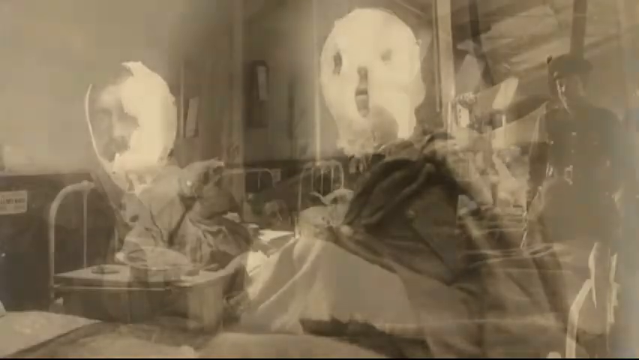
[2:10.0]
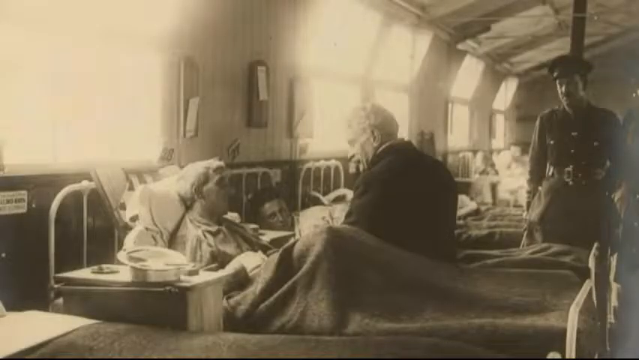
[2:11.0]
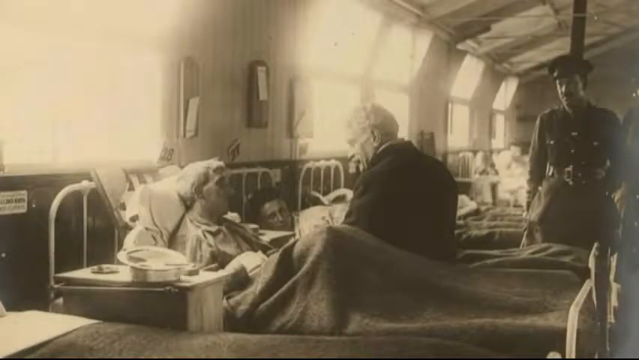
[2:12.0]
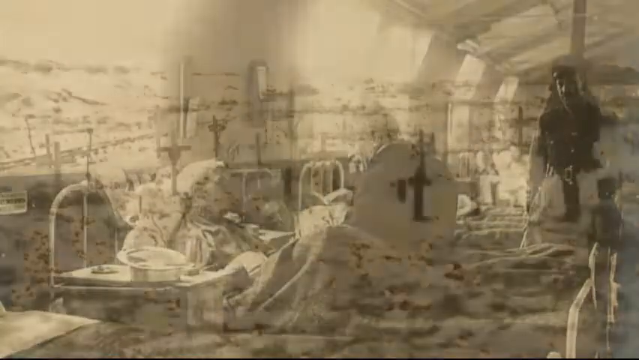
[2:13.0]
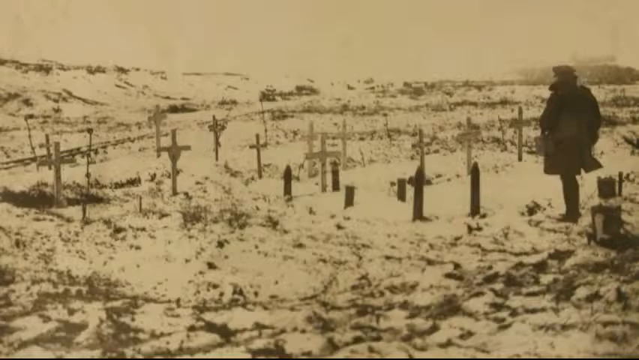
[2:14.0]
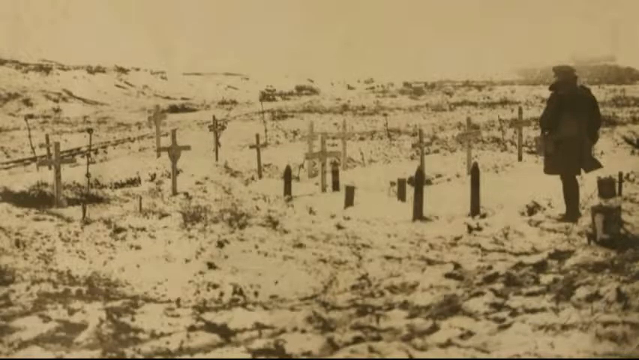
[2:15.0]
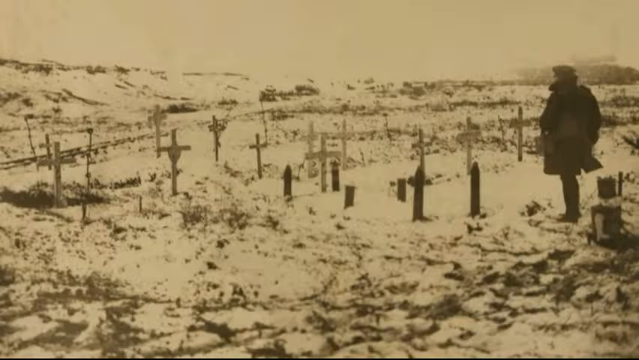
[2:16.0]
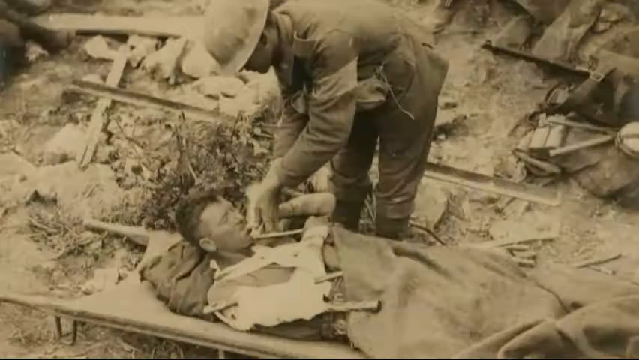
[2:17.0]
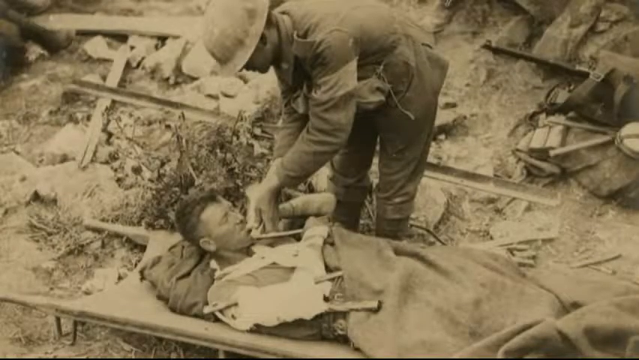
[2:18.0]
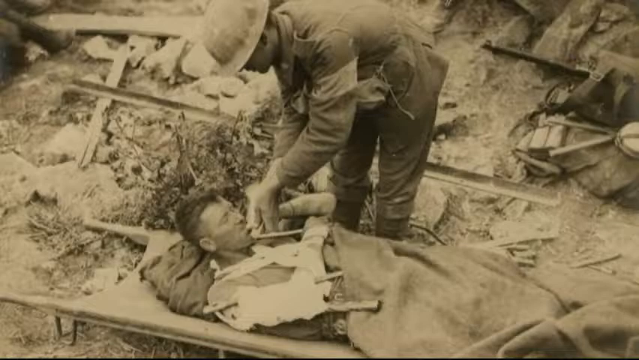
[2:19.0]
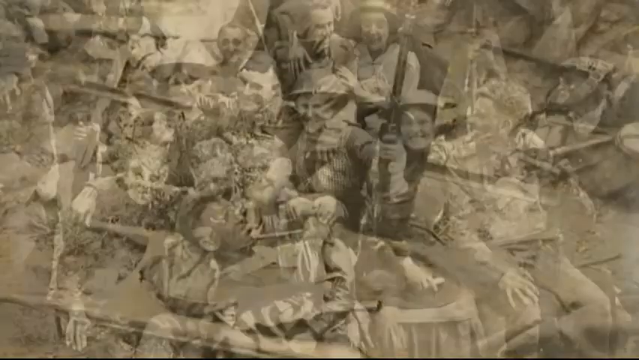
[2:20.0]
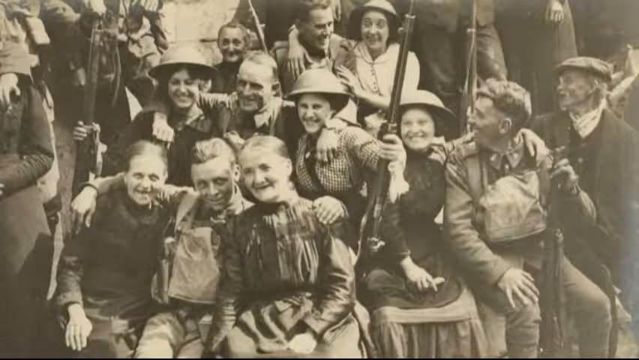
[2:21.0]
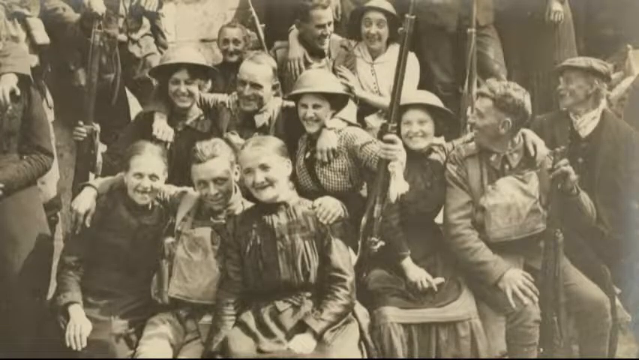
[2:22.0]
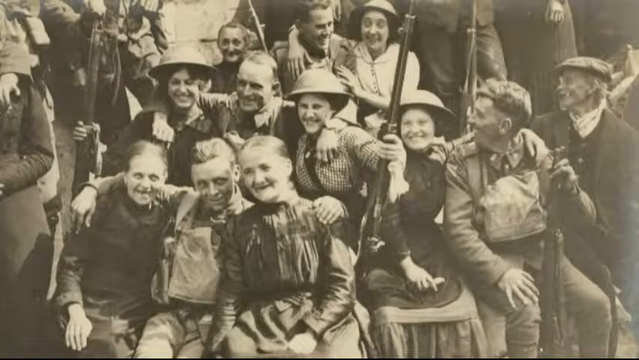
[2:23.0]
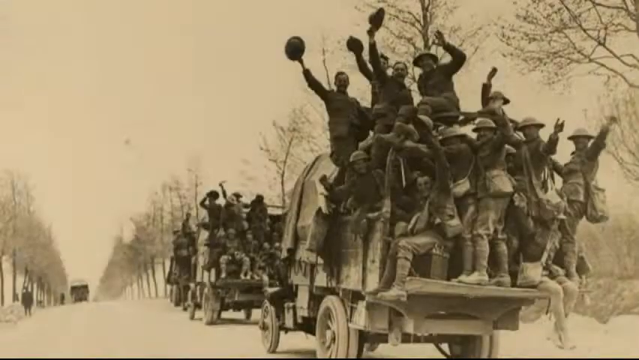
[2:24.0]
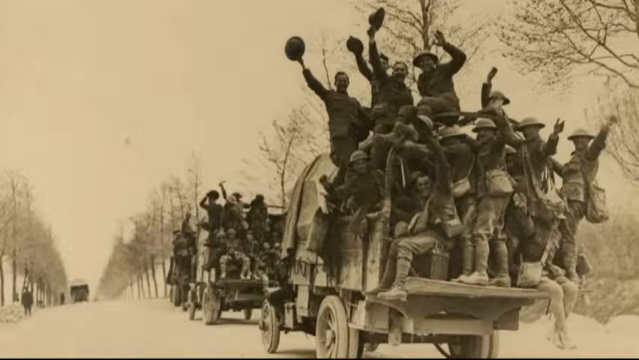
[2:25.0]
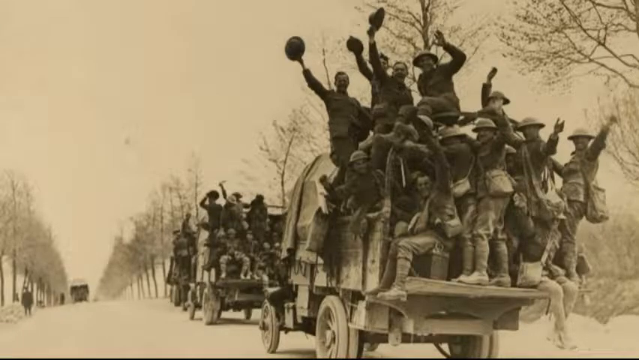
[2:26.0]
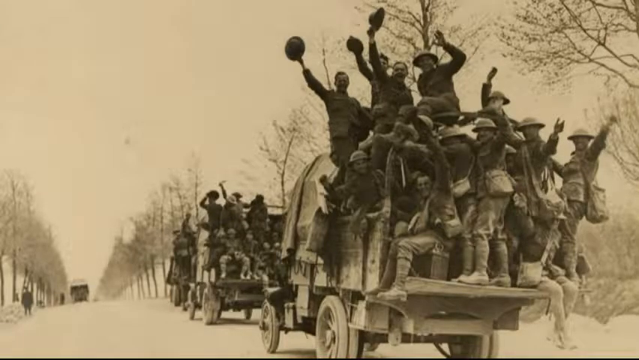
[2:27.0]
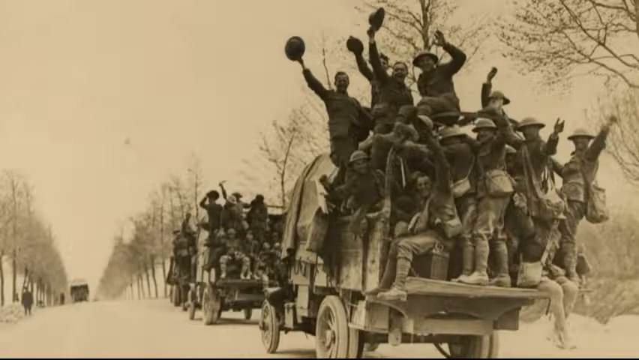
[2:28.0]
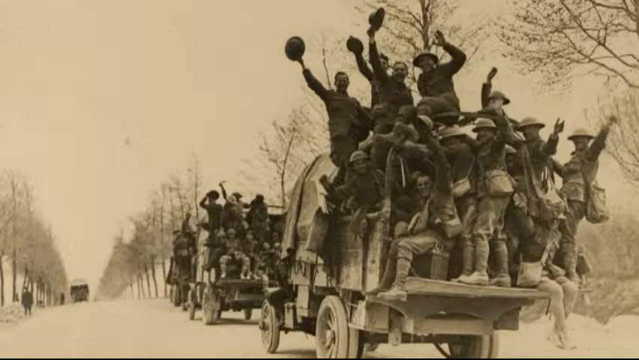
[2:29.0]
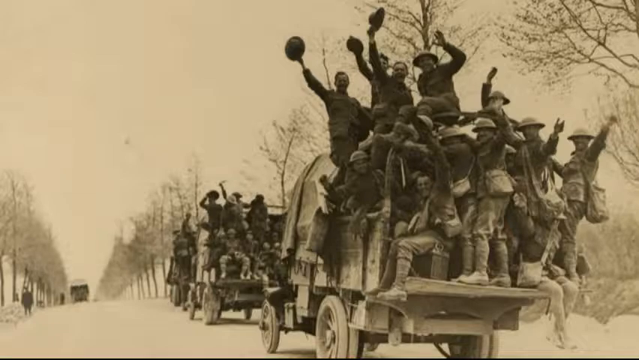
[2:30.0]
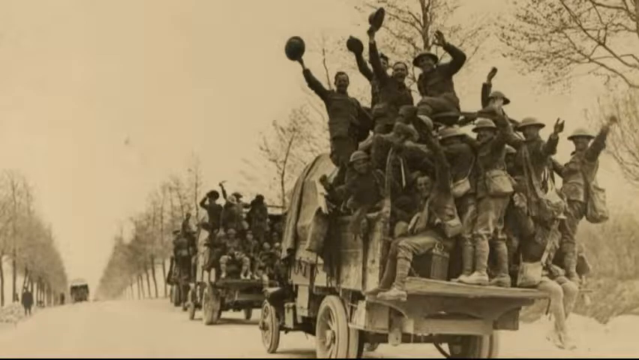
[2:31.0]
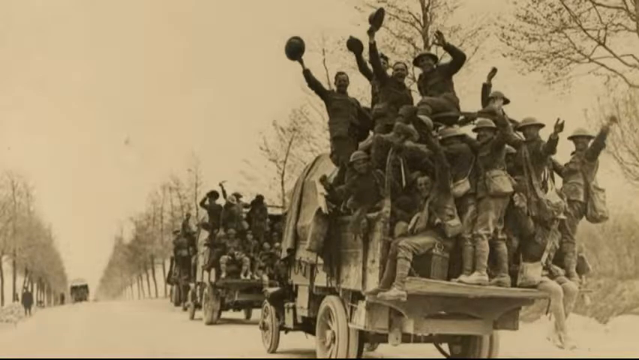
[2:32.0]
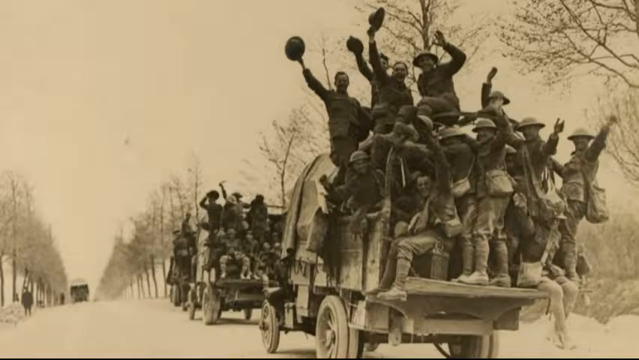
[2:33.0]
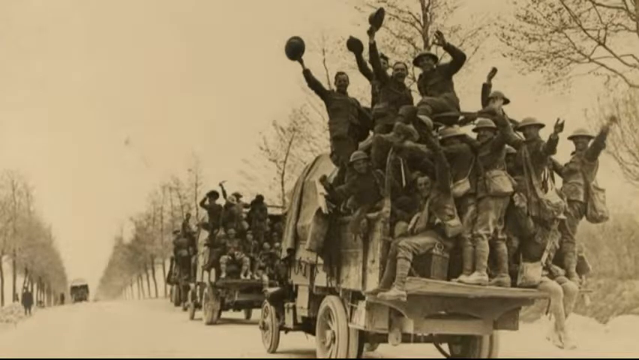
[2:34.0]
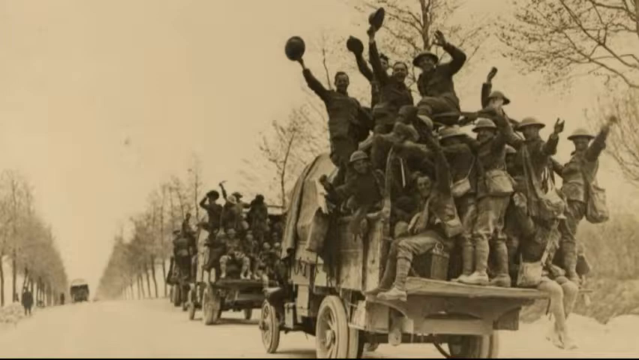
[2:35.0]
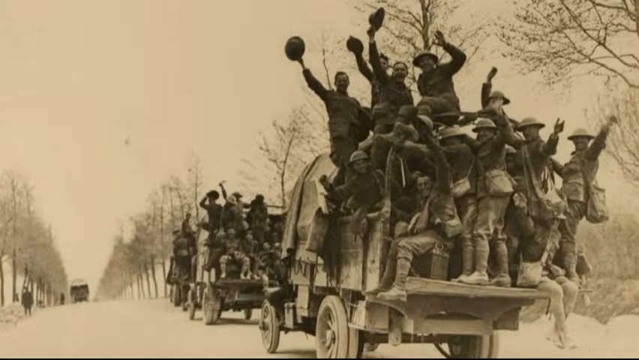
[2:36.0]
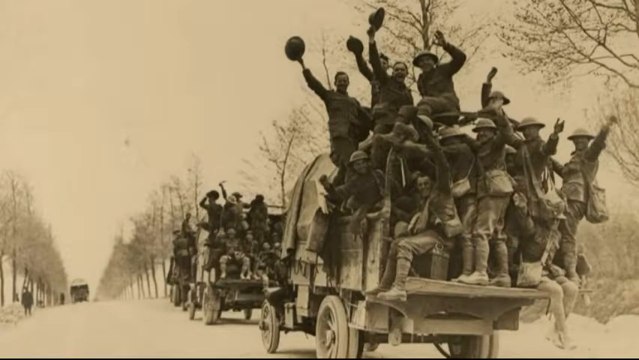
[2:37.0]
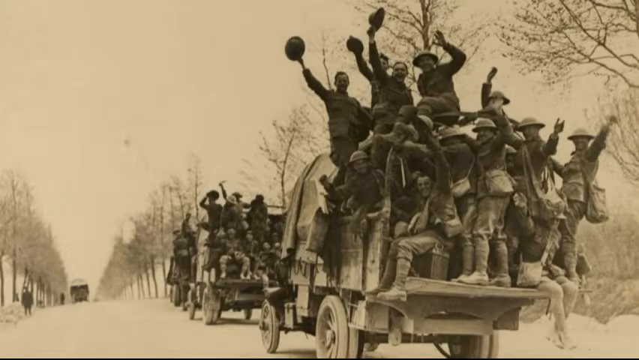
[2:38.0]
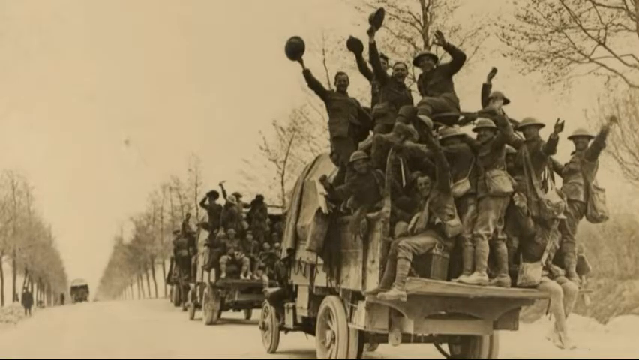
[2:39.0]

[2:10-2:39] A black-and-white photo shows a large room with hospital beds. A bed has a plain white metal headboard with a pillow against it, and a man lies in the bed with a cover over his bottom half. To his right is a small table with what looks to be a bedpan on it. A man with gray hair in a black jacket sits on that bed in front of him. In the background, soldiers stand in military uniforms and military hats. The video cuts to a black-and-white photo of a large piece of land covered with snow, with crosses and headstones coming out of it and one person standing looking at it. Another black-and-white photo shows a man lying on the ground, covered up, with his arm in a sling, and a soldier leaning over him giving him something to drink. A few other pictures of soldiers posing for the camera follow.